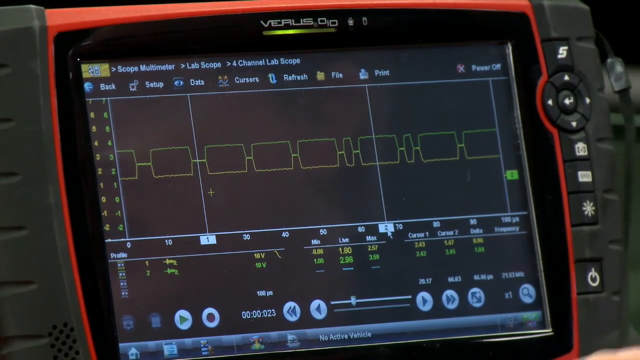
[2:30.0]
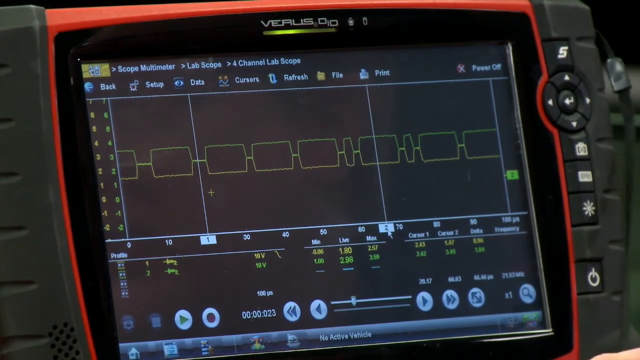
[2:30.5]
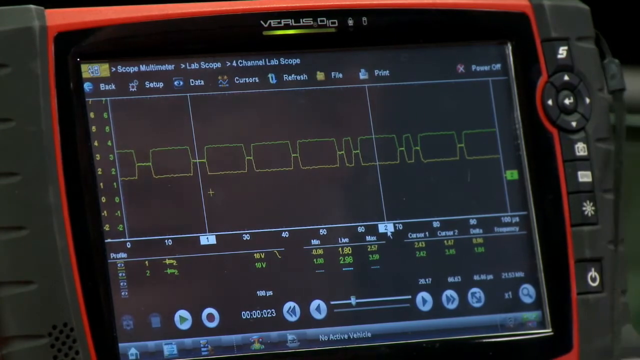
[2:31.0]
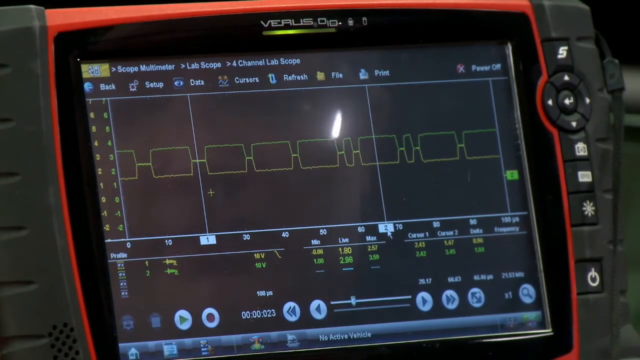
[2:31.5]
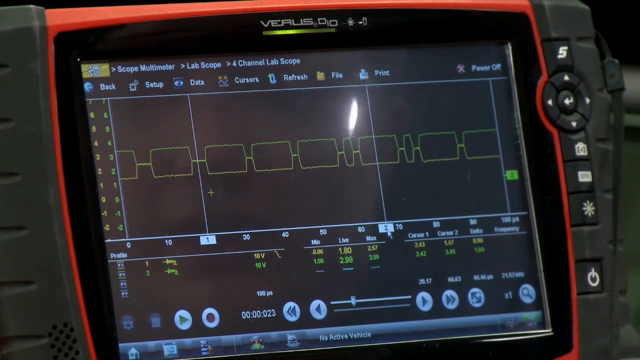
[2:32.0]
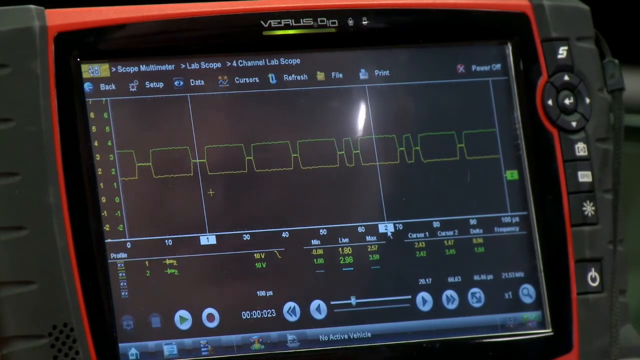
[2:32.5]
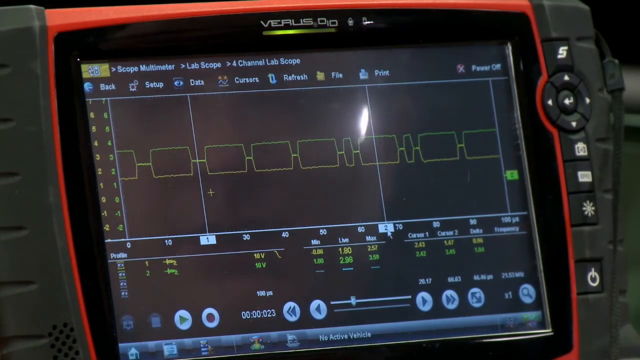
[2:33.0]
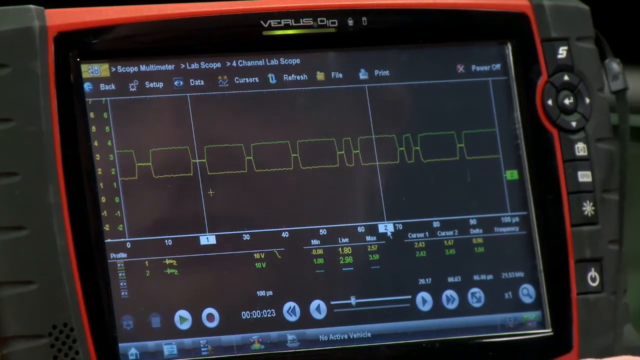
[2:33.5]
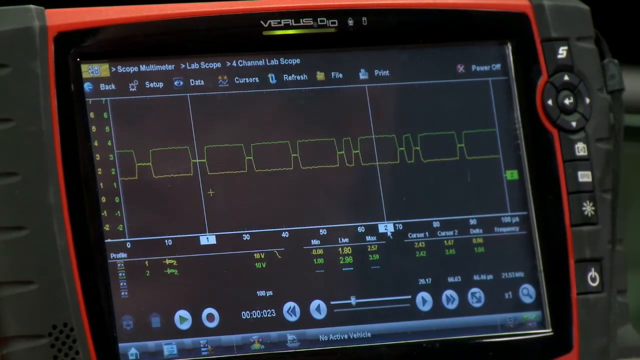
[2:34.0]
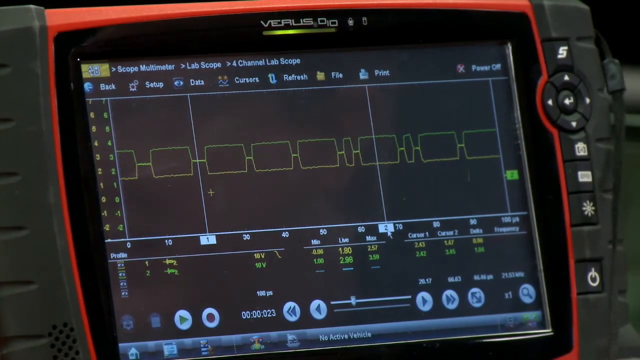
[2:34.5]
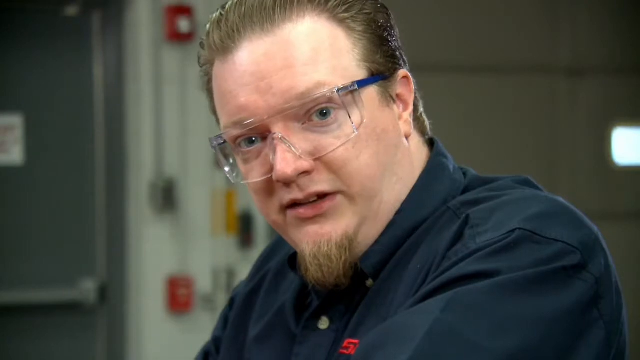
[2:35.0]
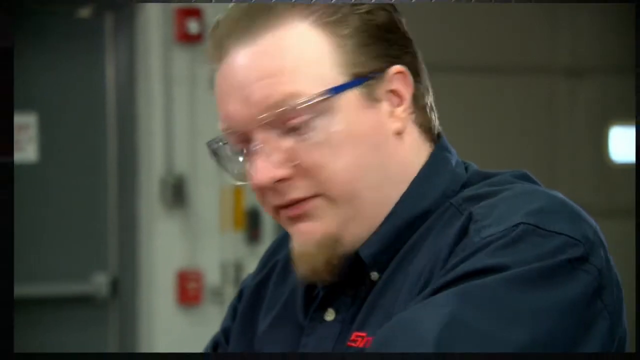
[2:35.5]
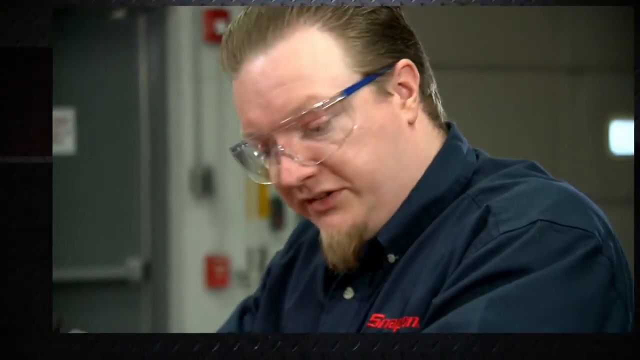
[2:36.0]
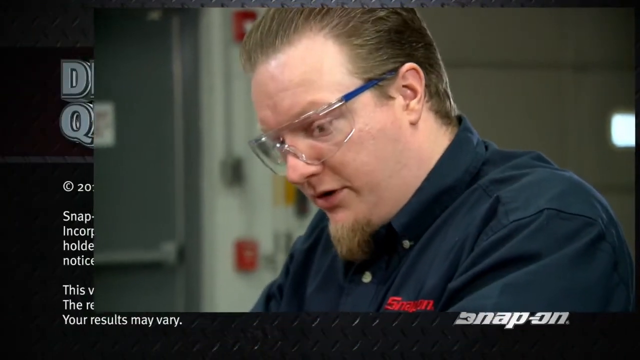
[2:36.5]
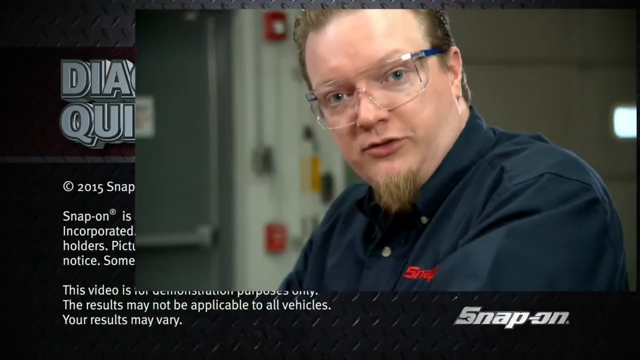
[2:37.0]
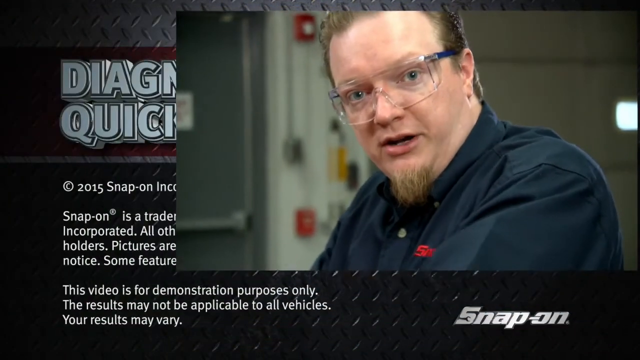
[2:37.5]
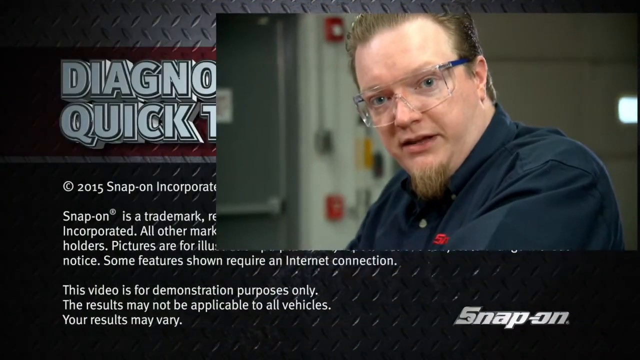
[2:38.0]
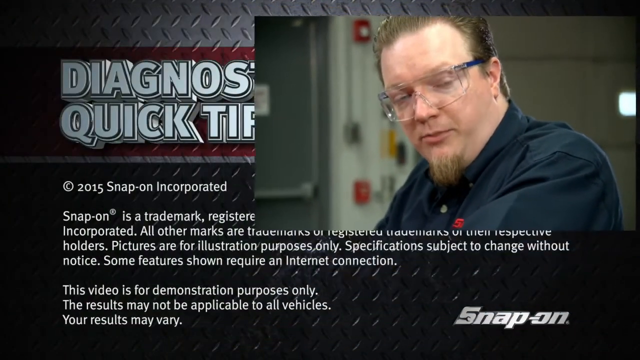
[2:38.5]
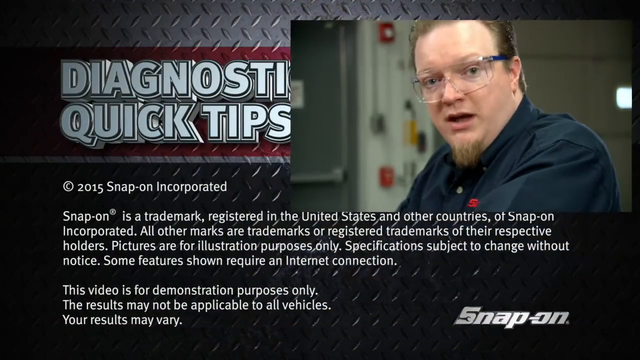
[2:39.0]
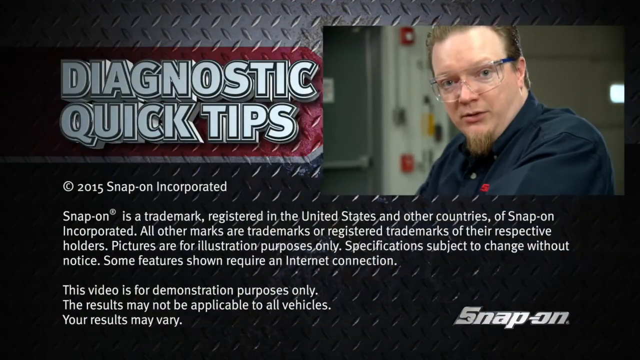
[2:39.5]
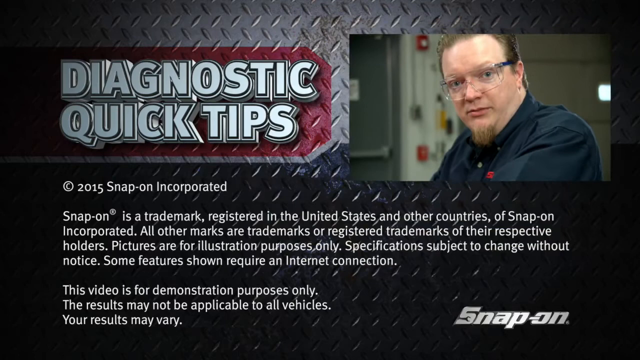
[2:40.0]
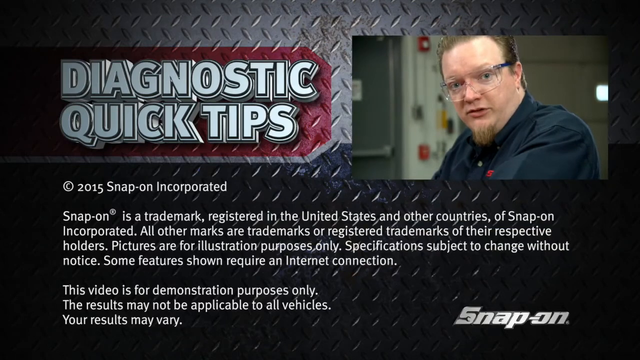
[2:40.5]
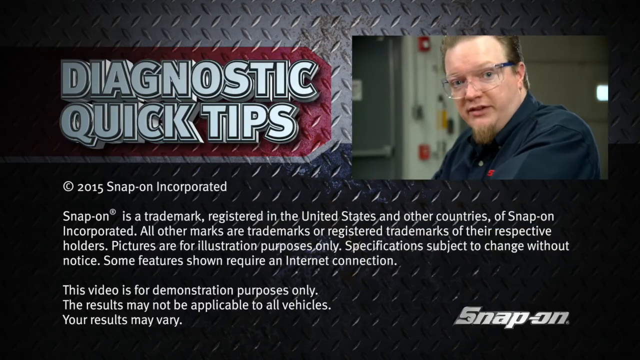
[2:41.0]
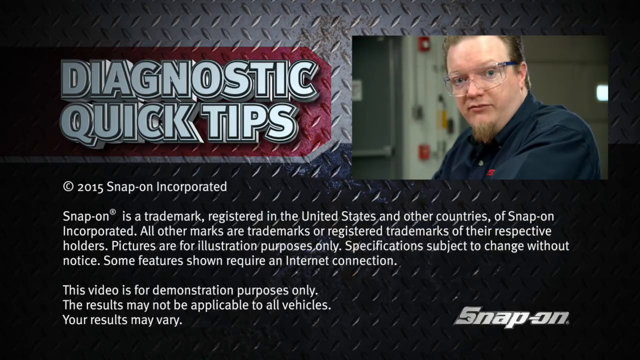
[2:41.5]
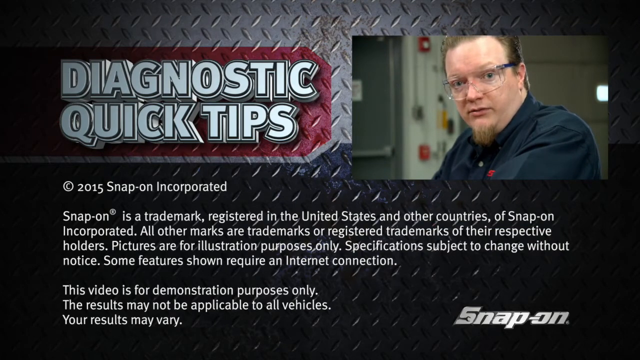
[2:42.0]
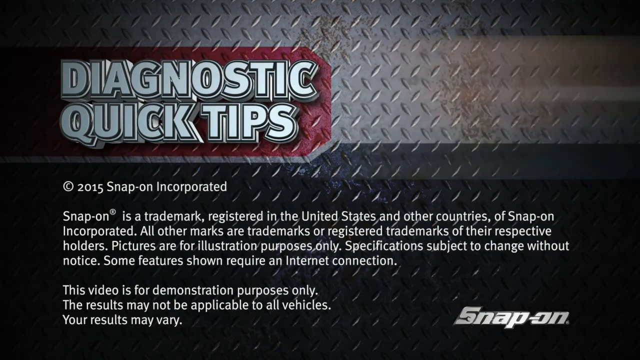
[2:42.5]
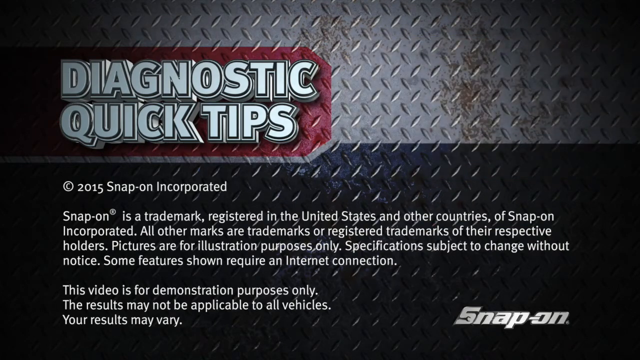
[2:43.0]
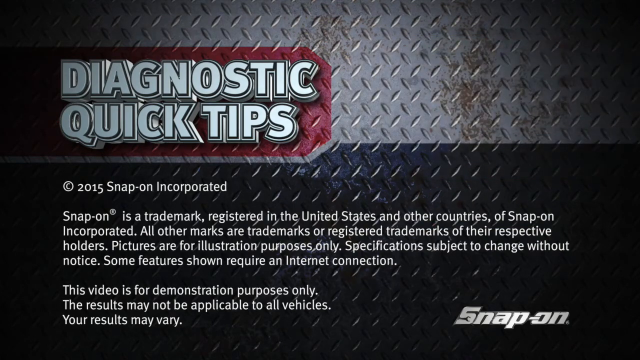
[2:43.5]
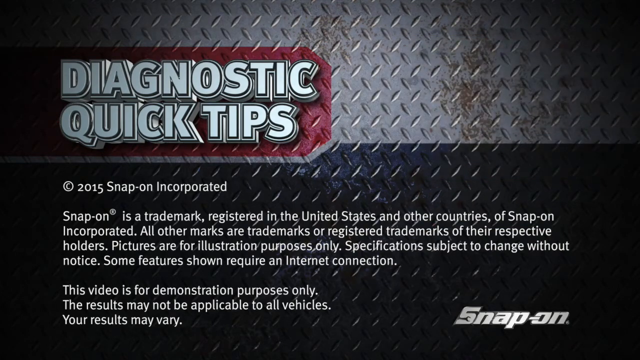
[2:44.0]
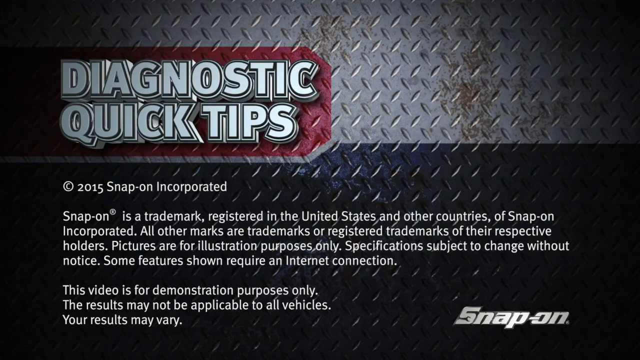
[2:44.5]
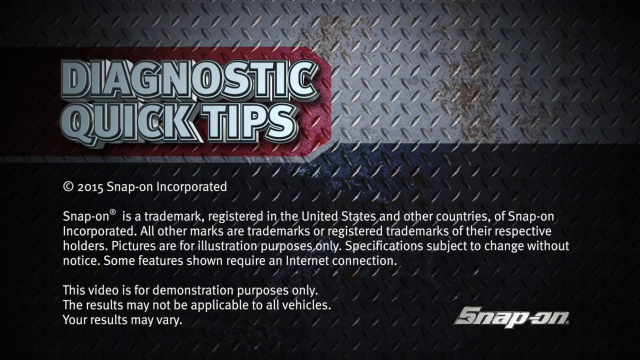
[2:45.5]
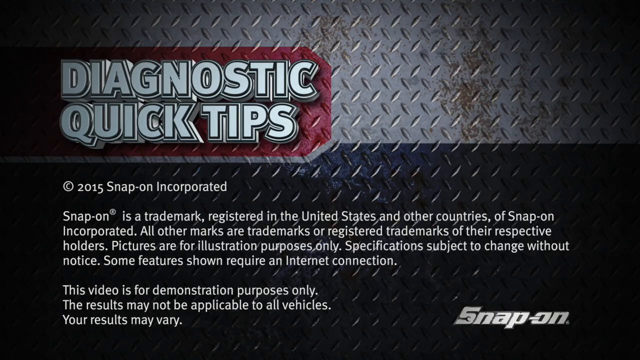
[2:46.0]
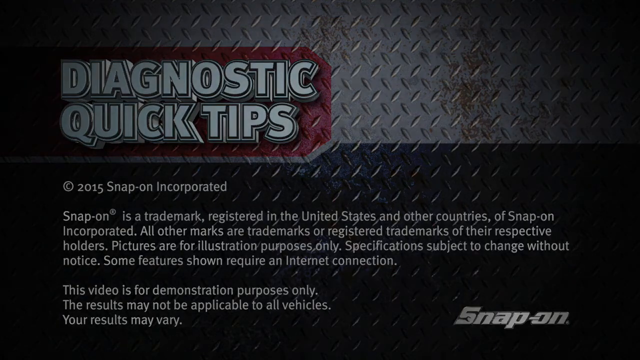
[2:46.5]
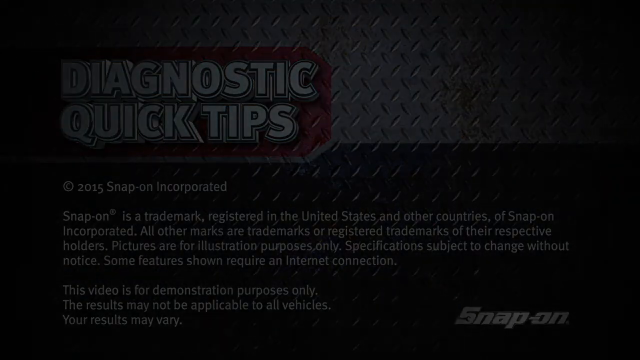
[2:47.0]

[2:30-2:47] Jason, the field trainer, and the display continue to be shown. The video ends with its title, "Diagnostic Quick Tips," and text reading "Copyright 2015 Snap-on Incorporated. Snap-on is a trademark registered in the United States and other countries of Snap-on Incorporated. All other marks are trademarks or registered trademarks of their respective holders. Pictures are for illustration purposes only. Specifications subject to change without notice. Some features shown require an internet connection." A disclaimer in the lower left corner says "This video is for demonstration purposes only. The results may not be applicable to all vehicles. Your results may vary." The lower right corner says "Snap-on."